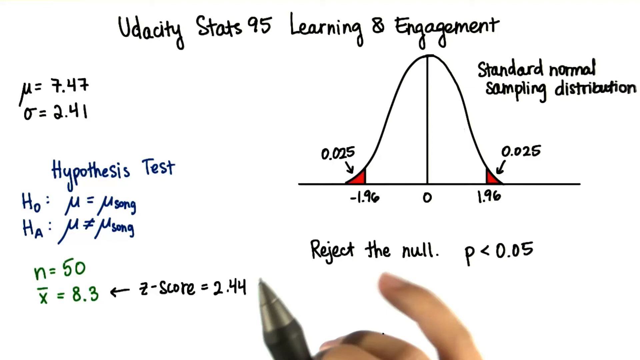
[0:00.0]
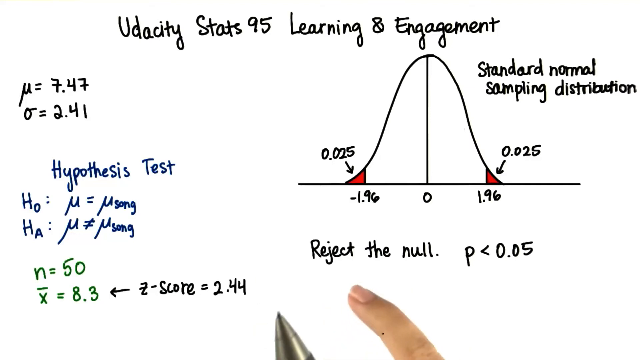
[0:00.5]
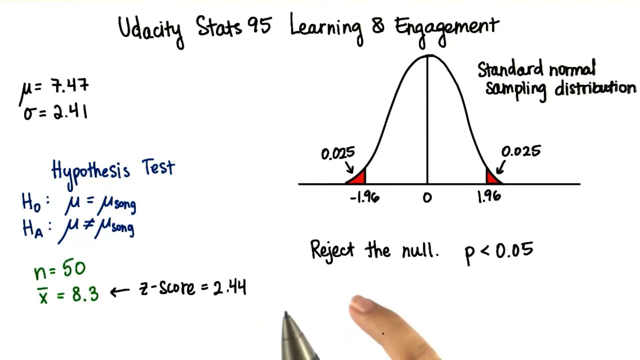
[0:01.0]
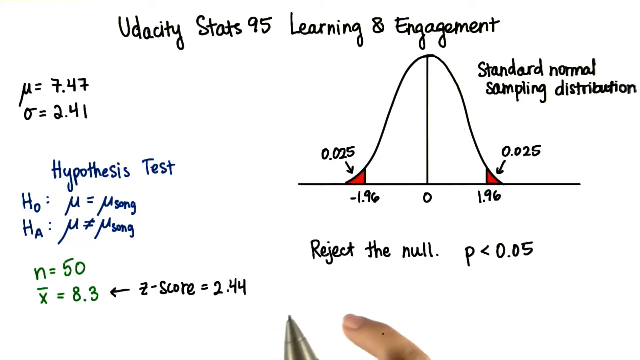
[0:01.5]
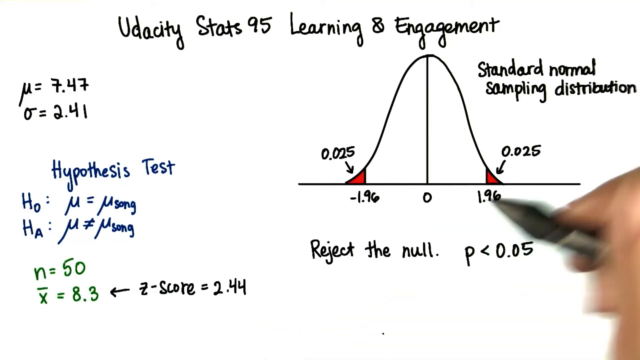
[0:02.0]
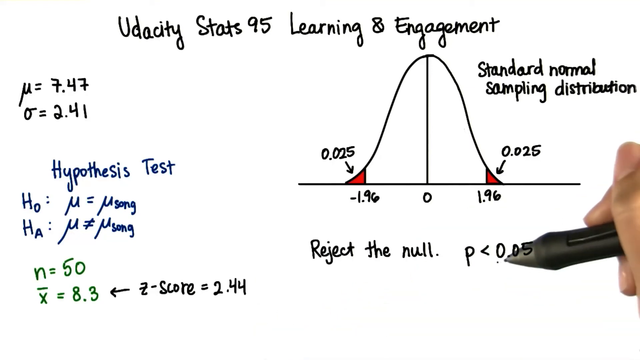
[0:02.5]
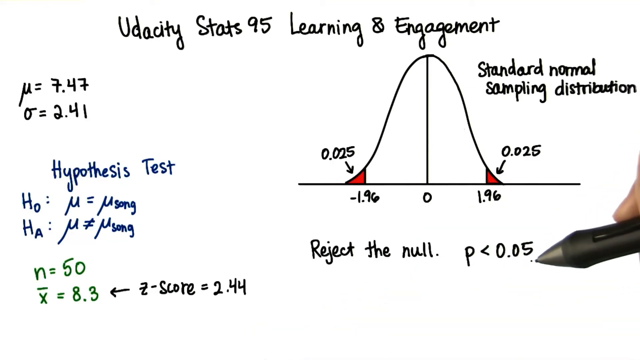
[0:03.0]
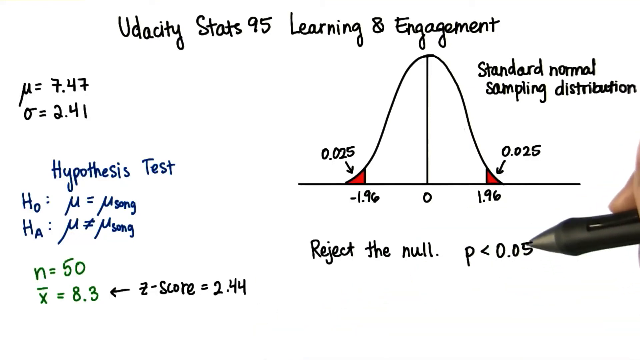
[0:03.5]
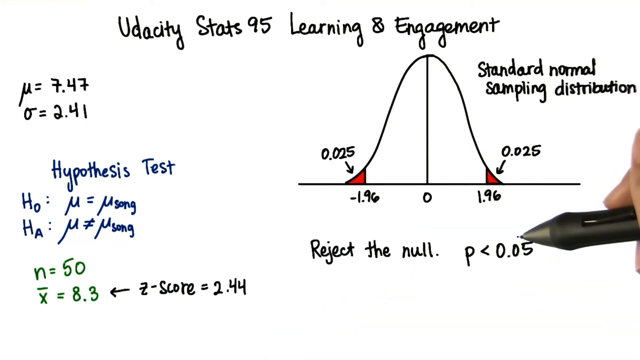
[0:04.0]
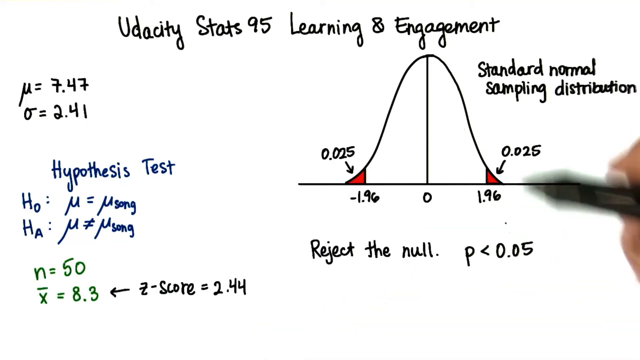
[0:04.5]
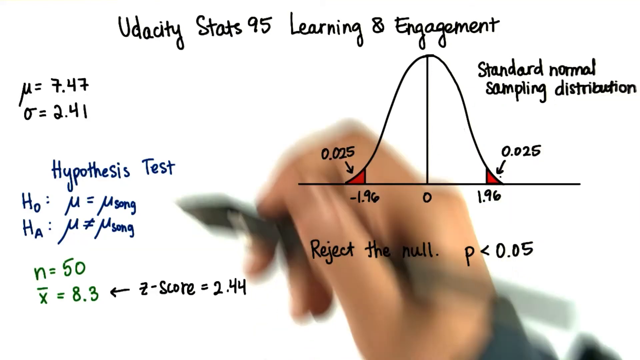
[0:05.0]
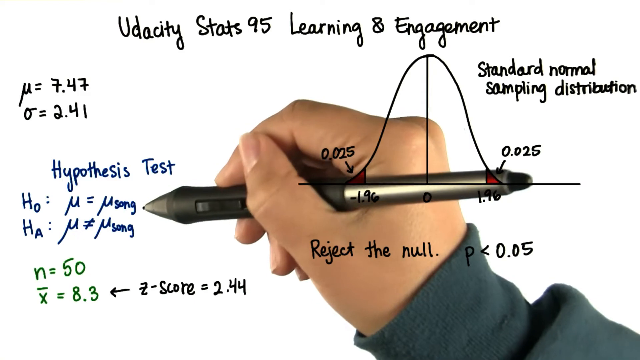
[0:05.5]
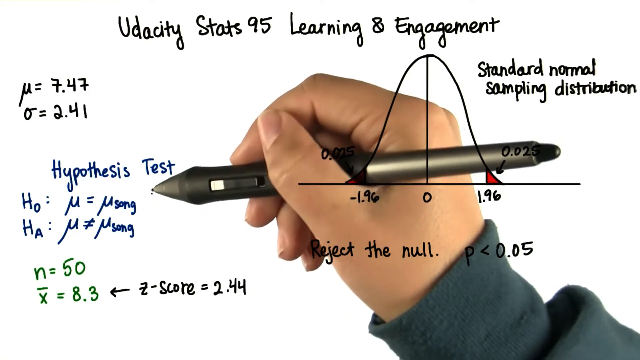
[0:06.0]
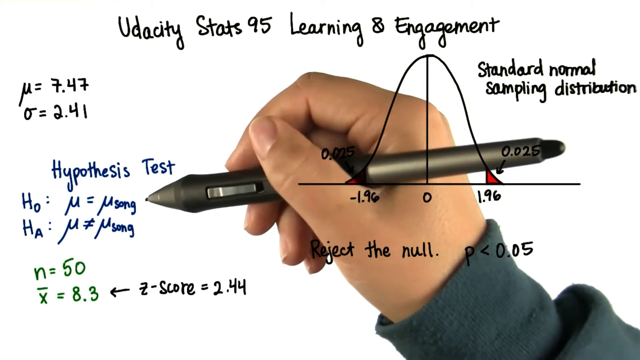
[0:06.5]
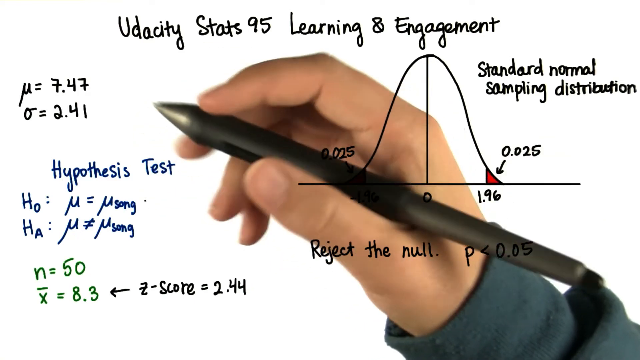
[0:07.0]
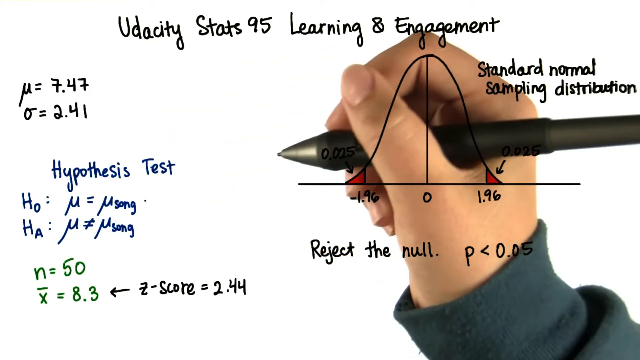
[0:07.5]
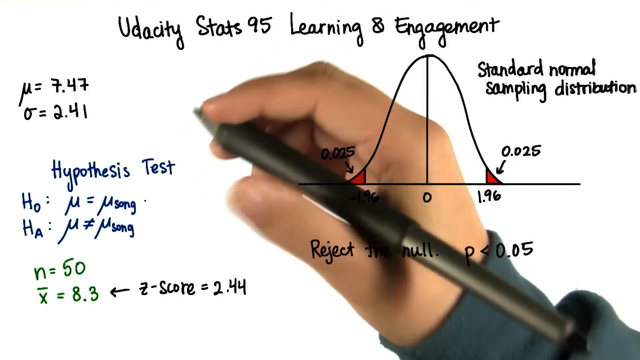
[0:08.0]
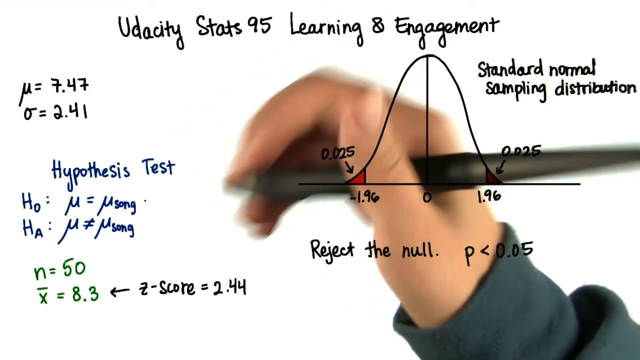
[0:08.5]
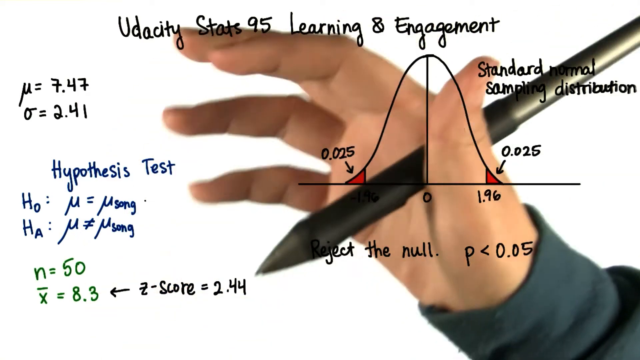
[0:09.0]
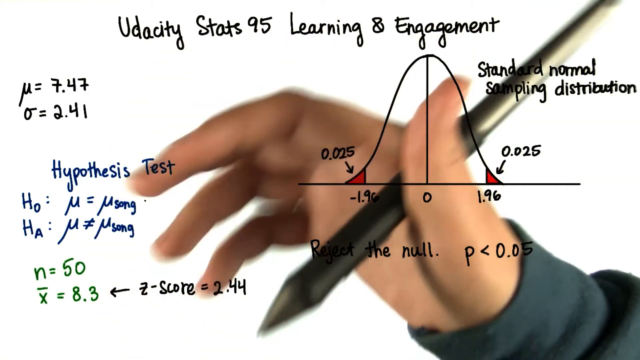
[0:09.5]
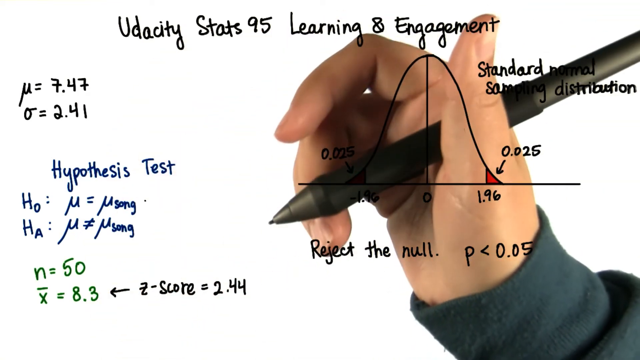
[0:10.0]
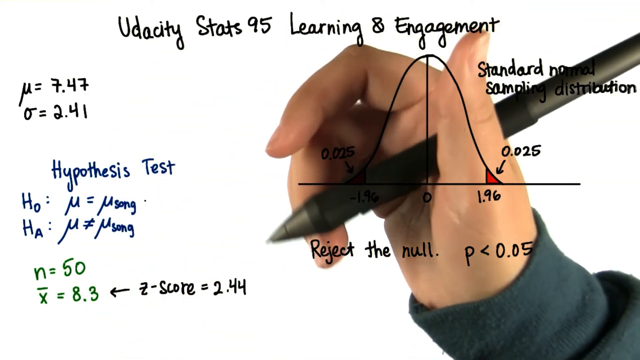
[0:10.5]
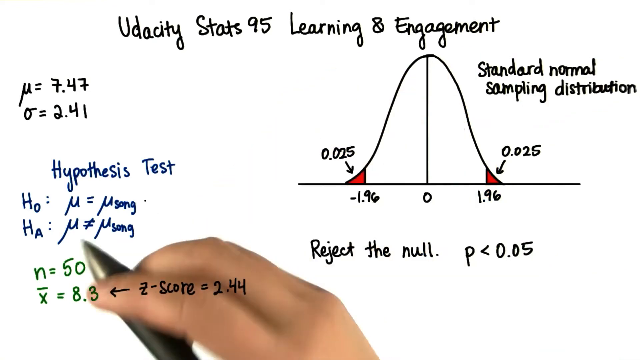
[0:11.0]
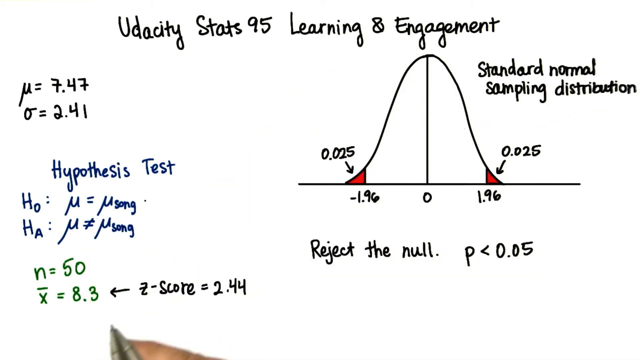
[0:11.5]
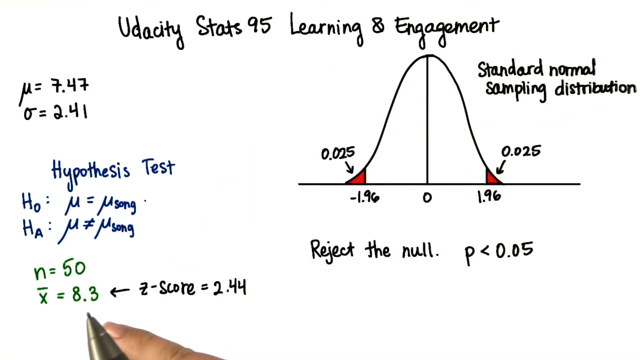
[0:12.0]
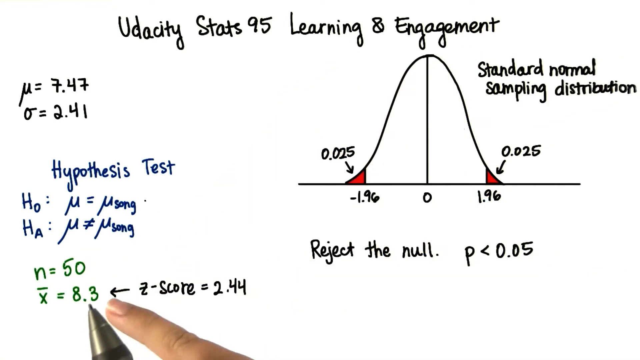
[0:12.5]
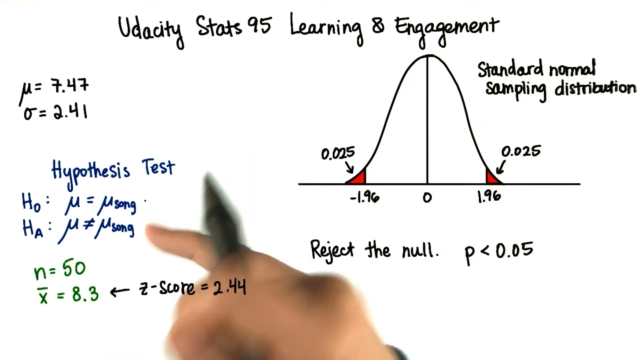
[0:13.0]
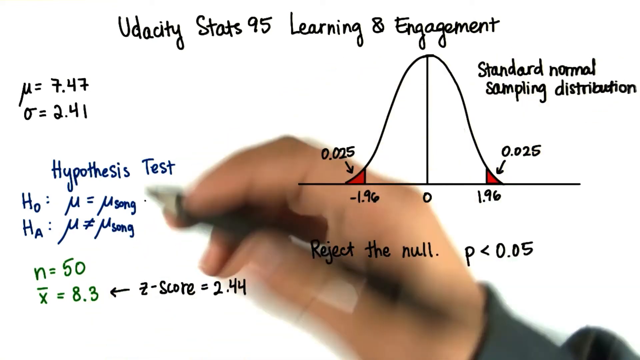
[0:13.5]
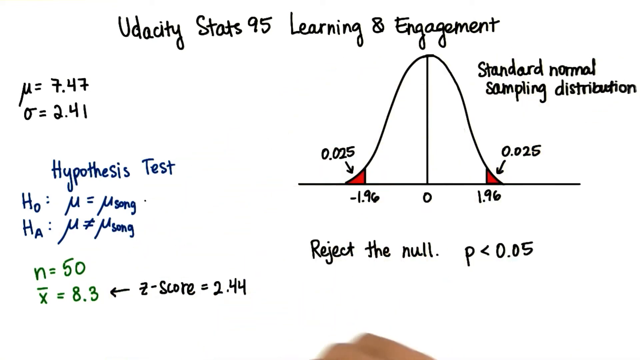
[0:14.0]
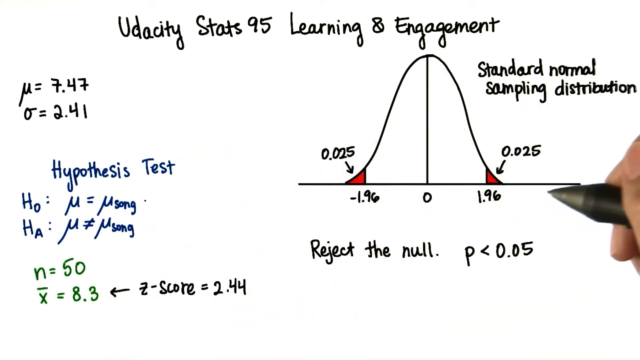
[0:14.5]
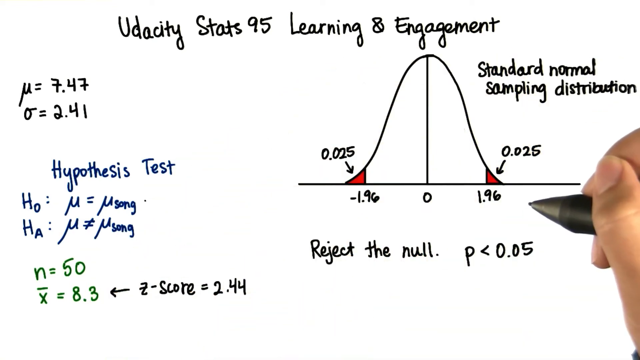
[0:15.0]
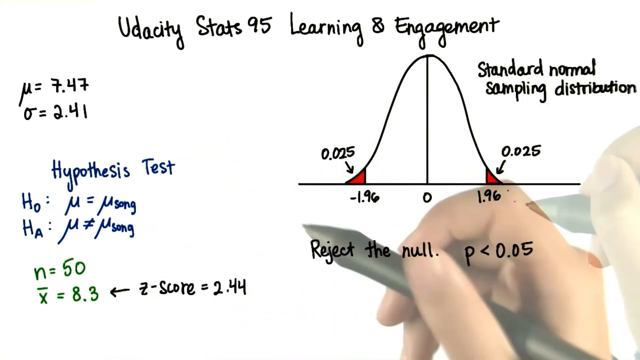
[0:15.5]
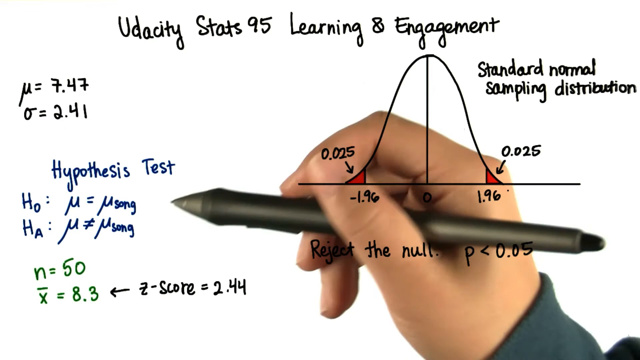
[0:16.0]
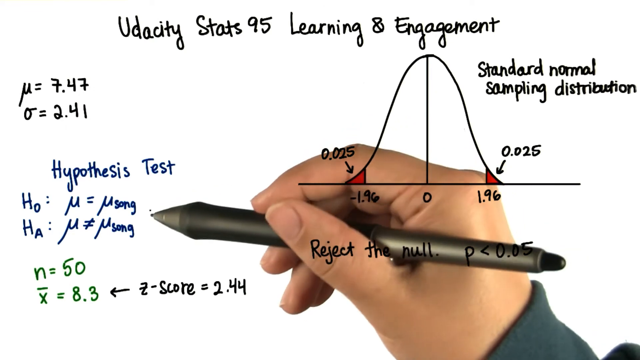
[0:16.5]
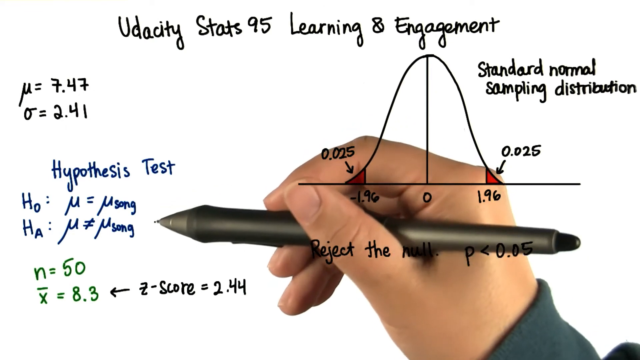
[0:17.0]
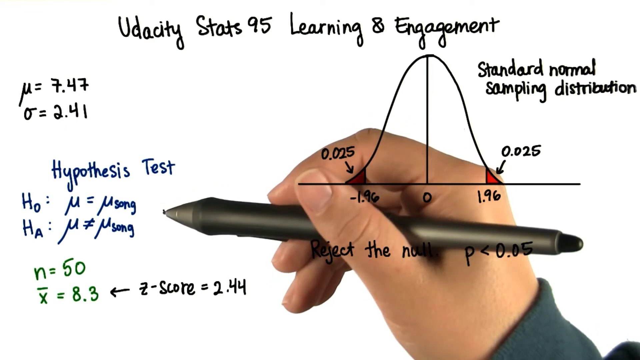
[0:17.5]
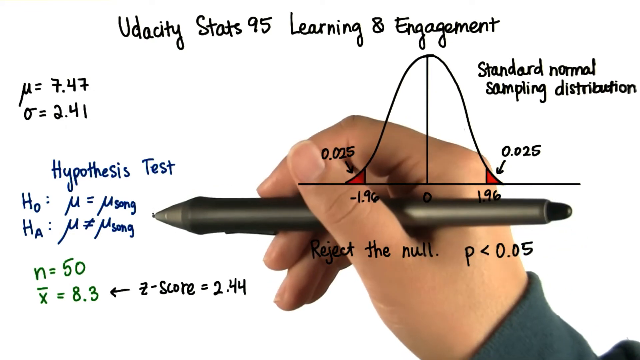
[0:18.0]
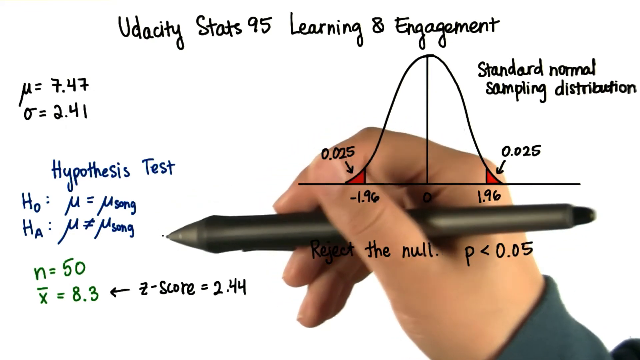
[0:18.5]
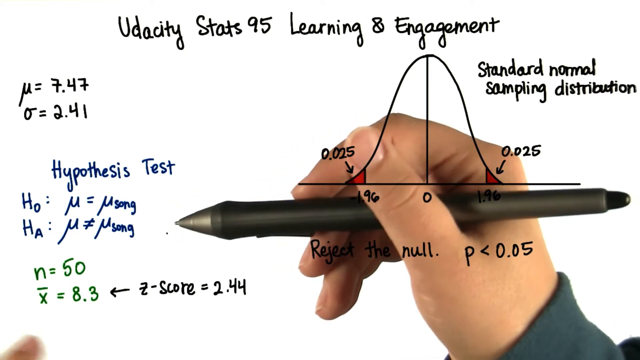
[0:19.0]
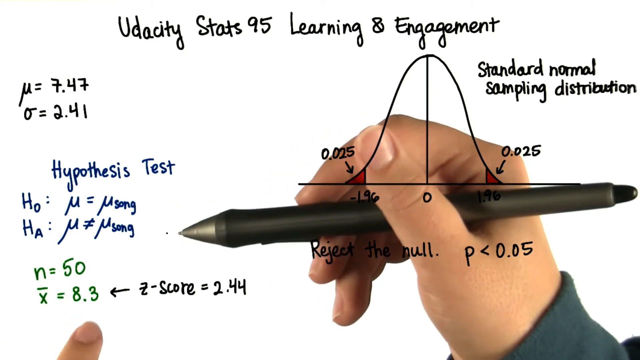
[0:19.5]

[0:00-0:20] The video appears to focus on mathematics and possibly statistical work. Most of the writing is in black, with some in blue and green, and a person's finger points things out. The title across the top says "Udacity Stats 95 Learning and Engagement." In the top right-hand corner there seems to be a graph showing 1.96 and 0.025, with text reading "reject the null, P less than 0.05." Below are symbols, including a U-like symbol equal to 7.47 and an O equal to 2.41, with "hypothesis test." In blue it reads HO, U equals USONG, and HA, U does not equal USONG. In green there is N equals 50 over X equals 8.3, with an arrow that has a Z with a slash through it, and Z-score equals 2.44. A person's finger and a pen work over the top of this, pointing things out and maybe drawing a little.